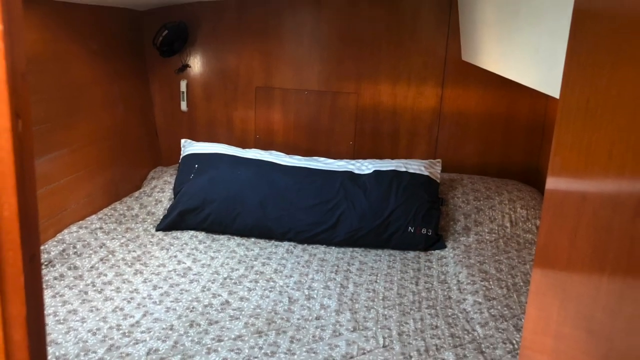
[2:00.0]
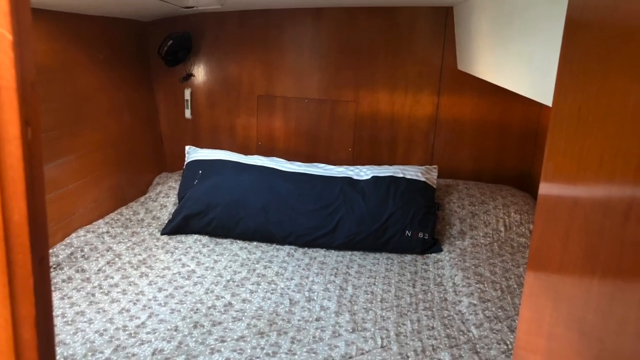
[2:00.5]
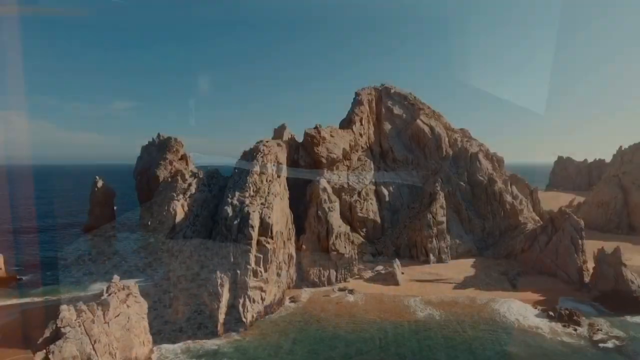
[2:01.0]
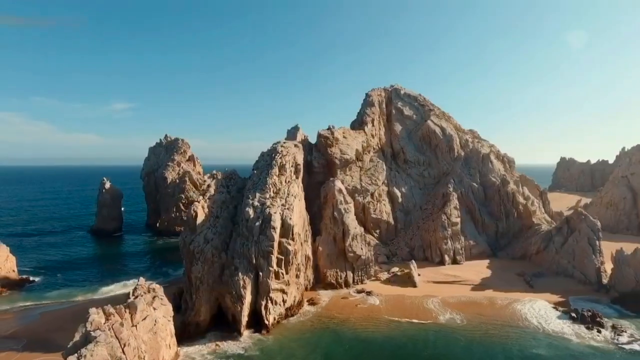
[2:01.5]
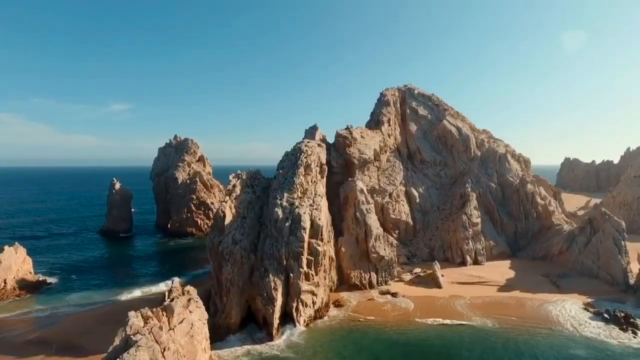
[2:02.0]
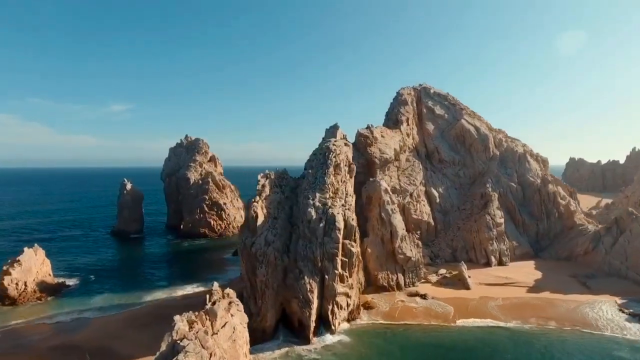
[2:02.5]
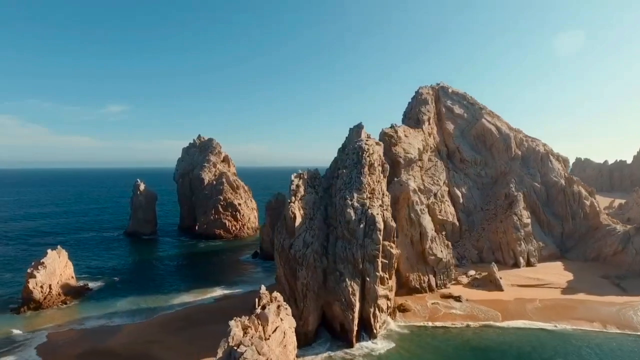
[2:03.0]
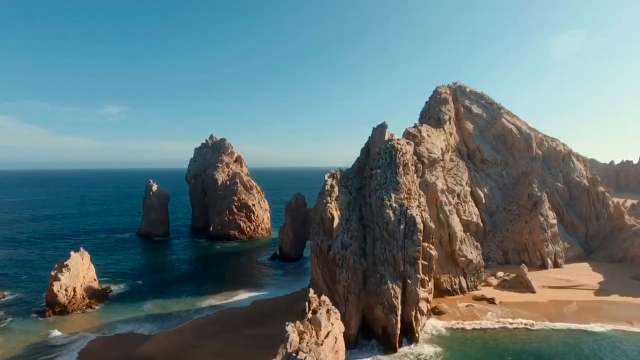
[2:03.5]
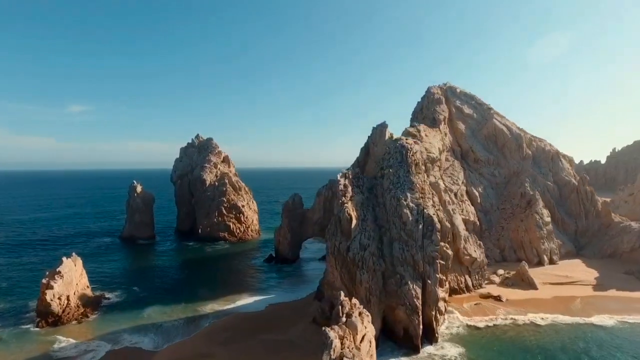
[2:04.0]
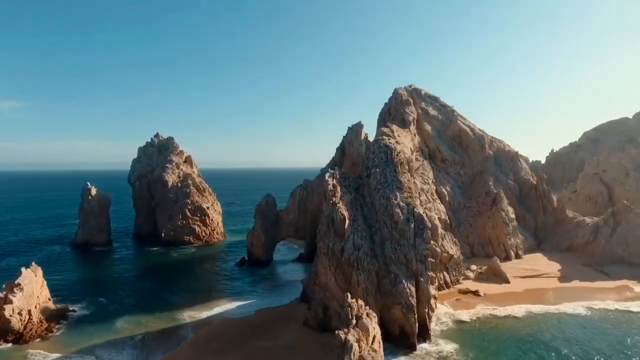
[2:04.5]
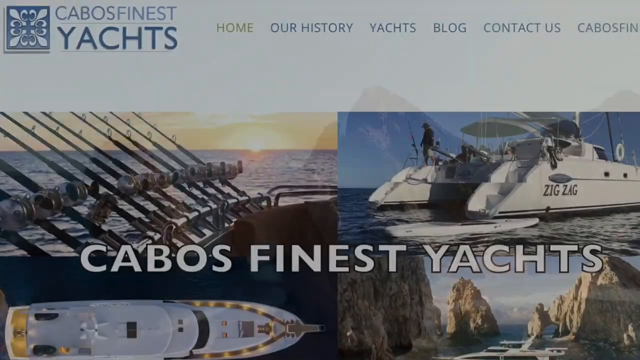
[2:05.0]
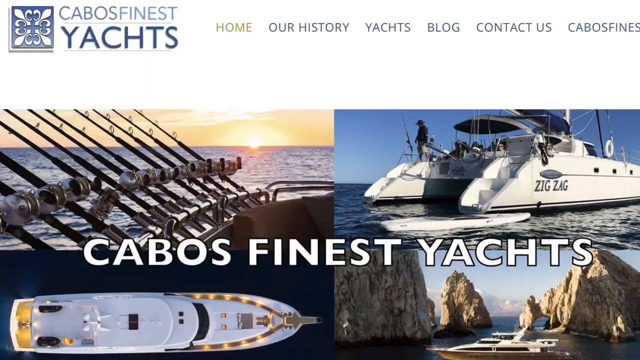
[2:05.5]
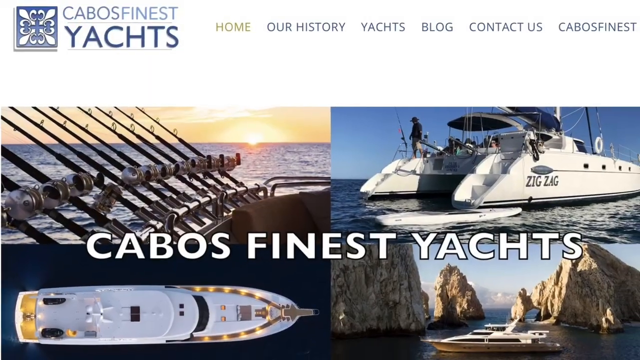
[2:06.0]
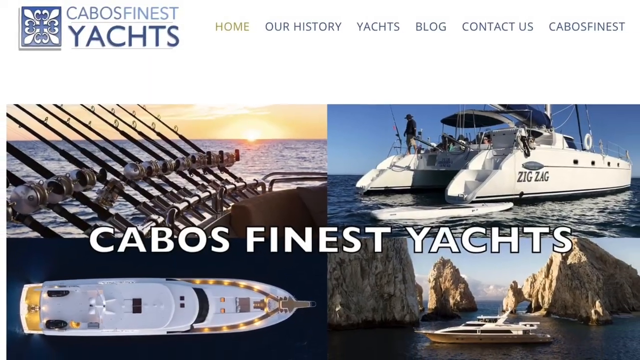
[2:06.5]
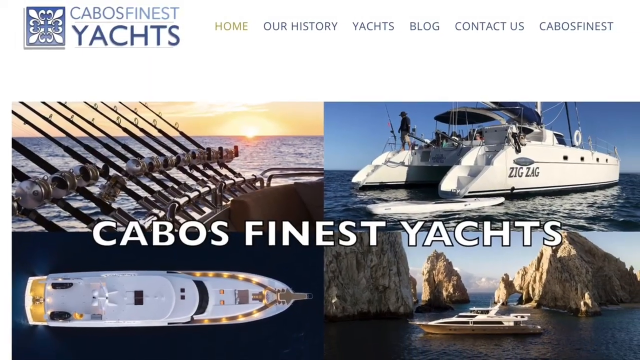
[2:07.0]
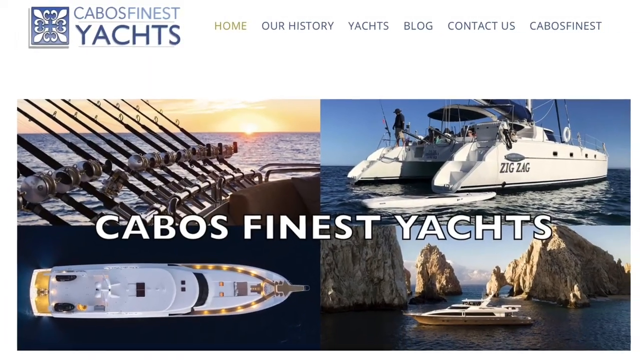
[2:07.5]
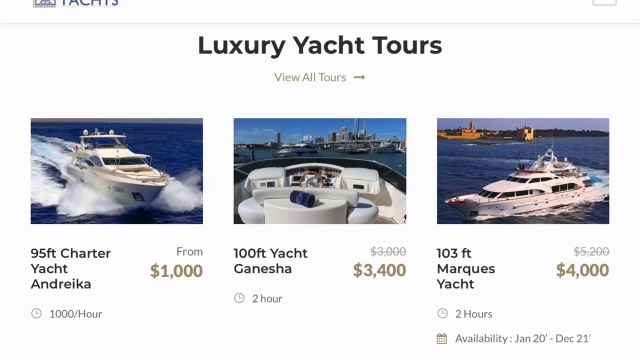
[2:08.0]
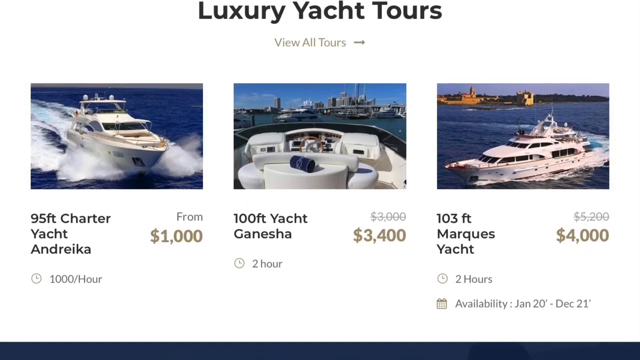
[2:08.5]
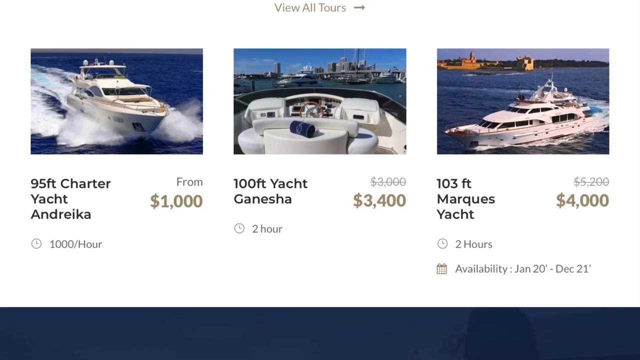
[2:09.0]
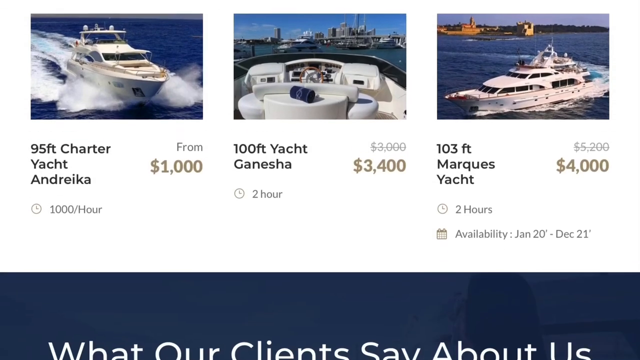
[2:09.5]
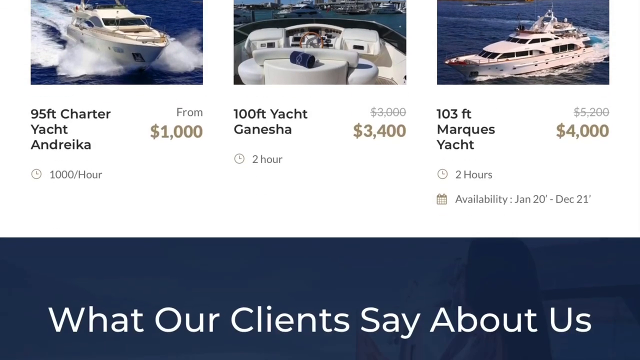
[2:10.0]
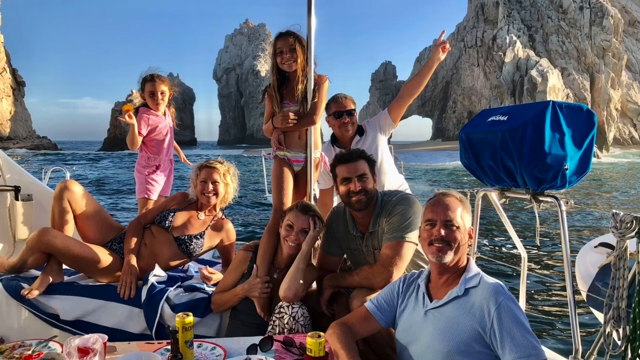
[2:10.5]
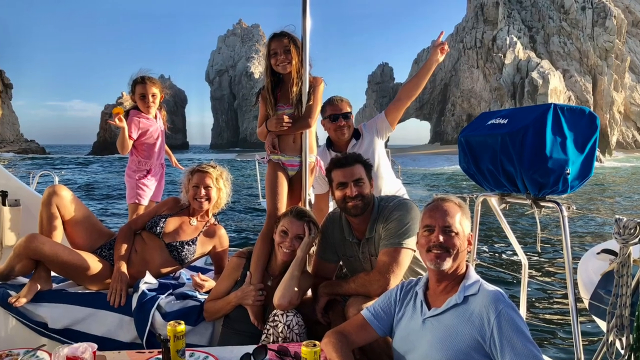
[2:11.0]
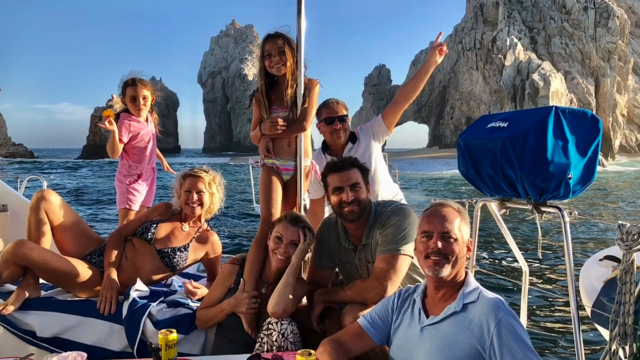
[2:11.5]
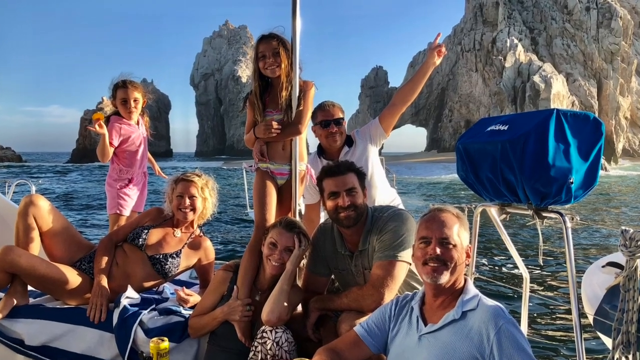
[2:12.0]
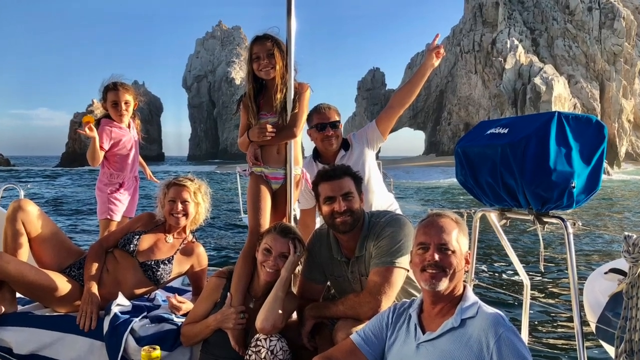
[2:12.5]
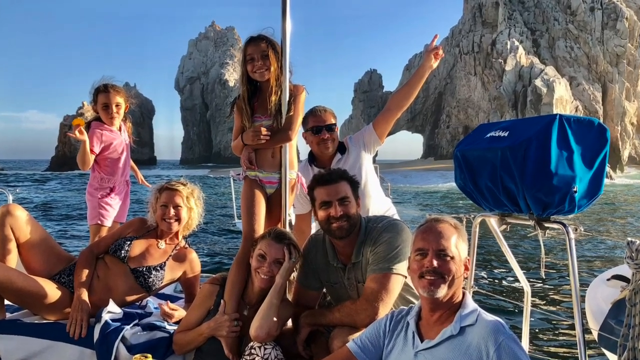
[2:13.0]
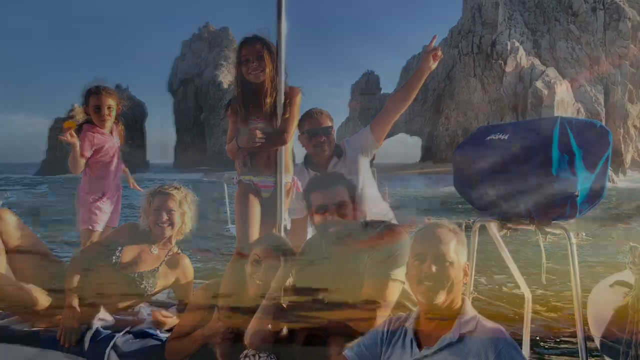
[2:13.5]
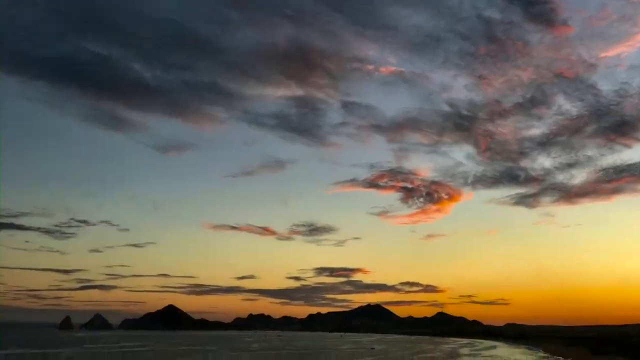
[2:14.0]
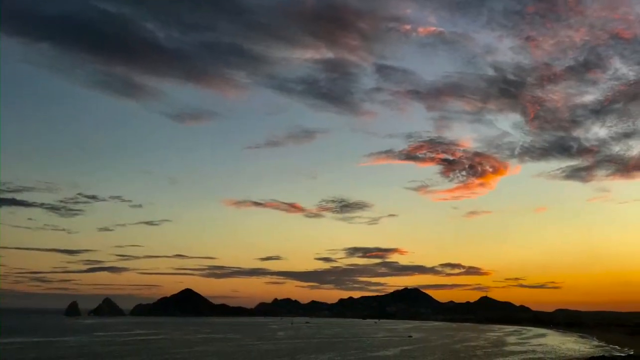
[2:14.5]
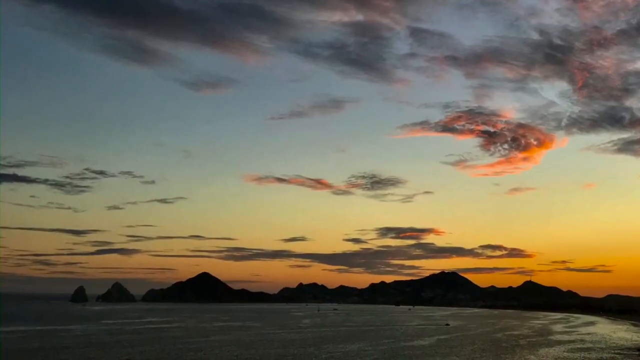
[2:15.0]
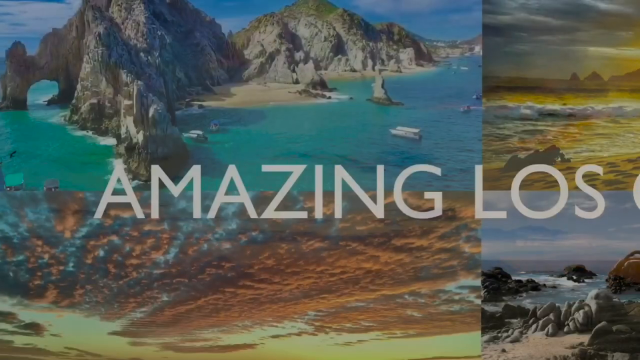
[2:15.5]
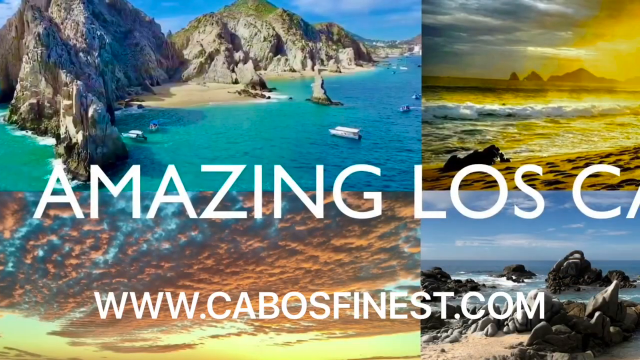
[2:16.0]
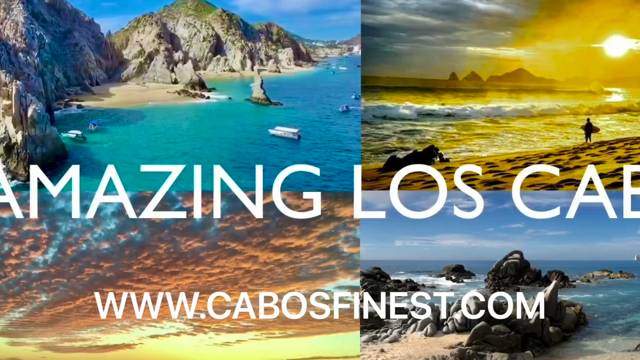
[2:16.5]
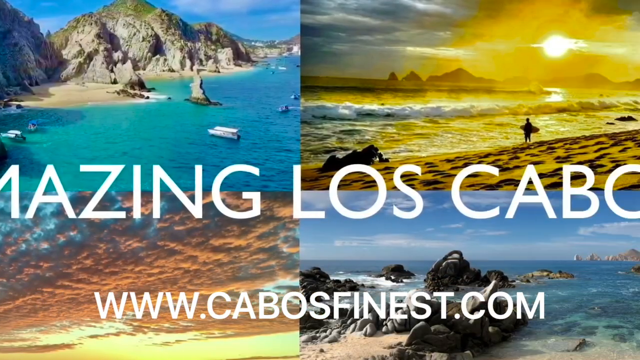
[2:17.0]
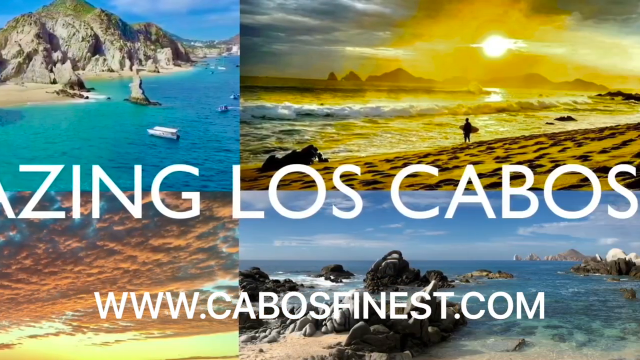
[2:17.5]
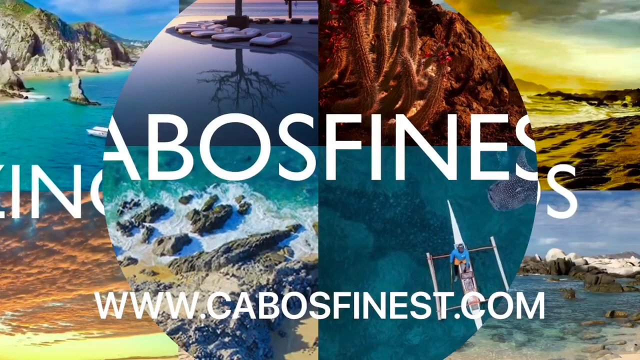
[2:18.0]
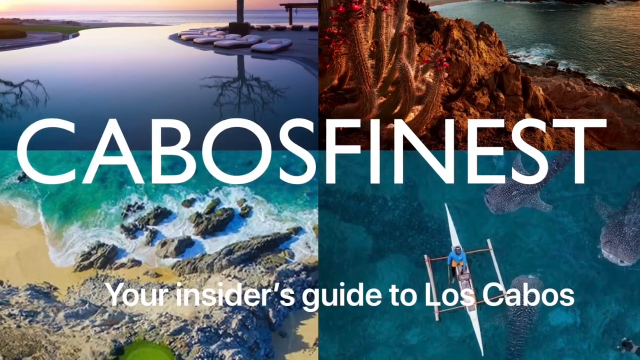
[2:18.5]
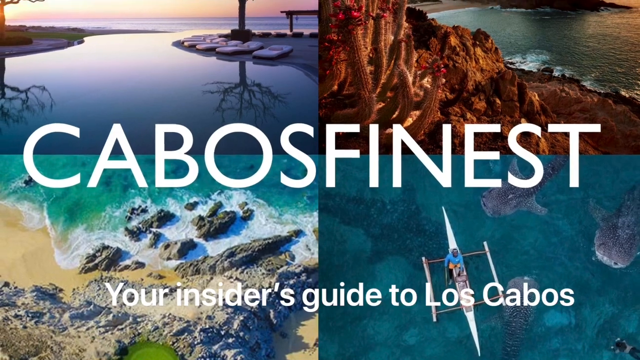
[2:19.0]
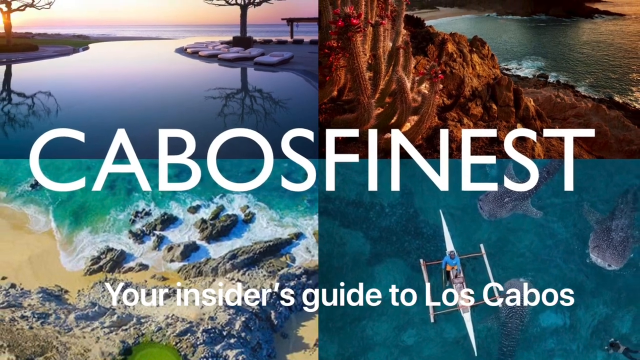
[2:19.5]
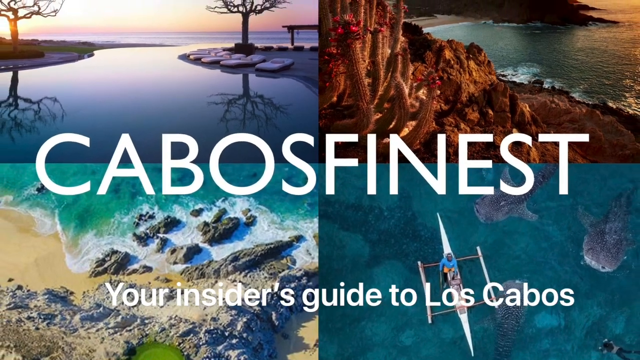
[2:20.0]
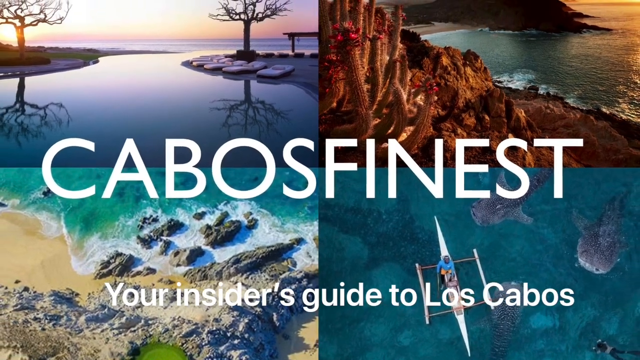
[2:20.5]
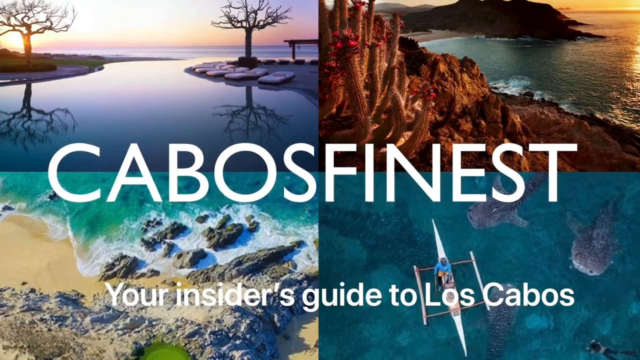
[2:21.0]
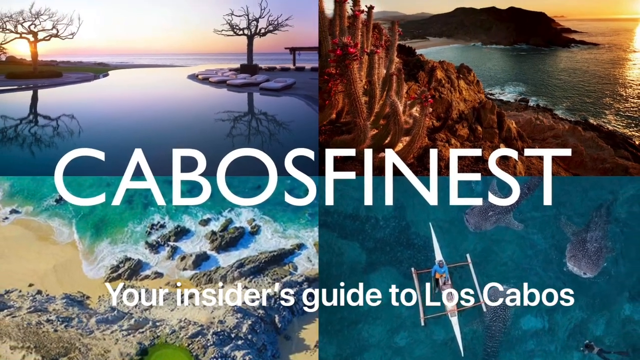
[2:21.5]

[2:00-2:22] A square wood room is completely filled by a mattress. The walls are very dark brown wood. The mattress has a gray comforter and two very long pillows, the back one white and the front one black. The video cuts to a drone shot of a large body of water with pieces of mountain and tall rocks jutting out of it as the drone slowly pans to the left. Next is a picture with "Cabo's Finest Yachts" at the top. Then a website appears, with "home our history yachts blog contact us" and "Cabo's Finest Yachts" at the top. Beneath that, the screen is split into four smaller screens: the top right shows a yacht with "zigzag" on it; the one to its left shows the deck of a boat with about 15 fishing rods hanging off it; another shows a yacht from above; and another shows a yacht in front of a mountain. Another website page follows with "luxury yacht tours" at the top, and beneath it small squares with yachts in them, with the cost of the tours on those yachts underneath.